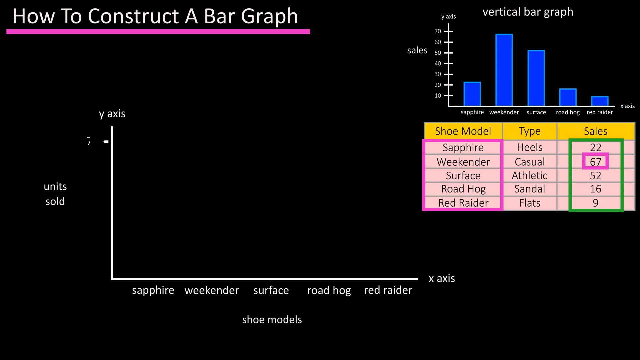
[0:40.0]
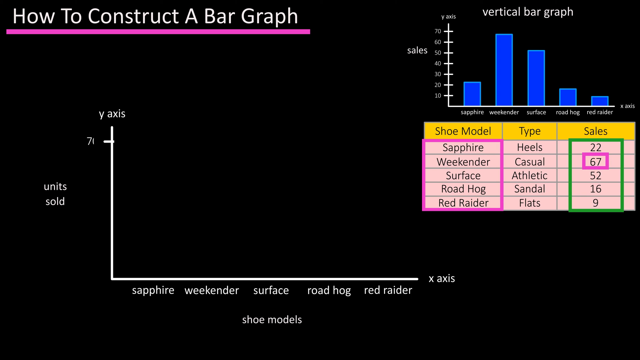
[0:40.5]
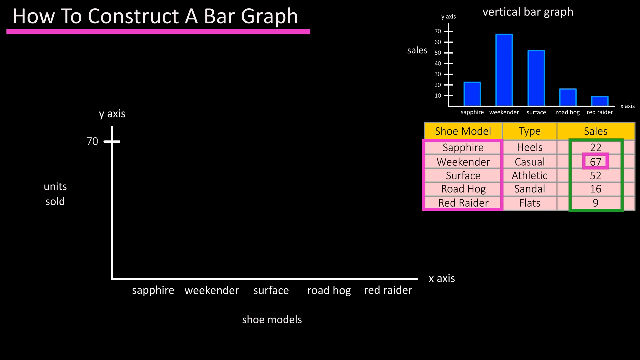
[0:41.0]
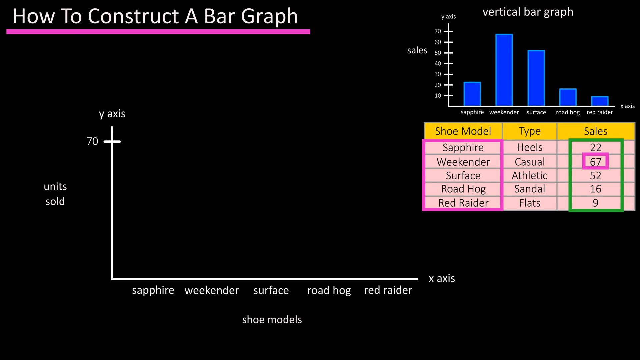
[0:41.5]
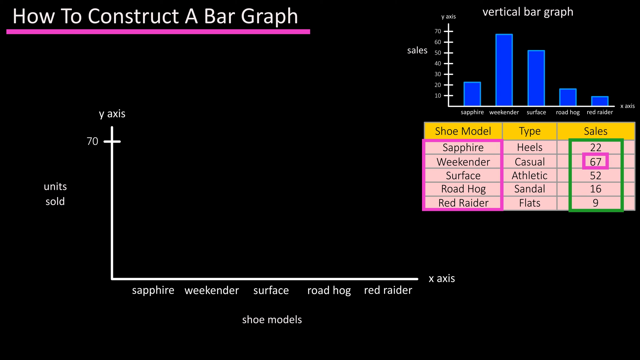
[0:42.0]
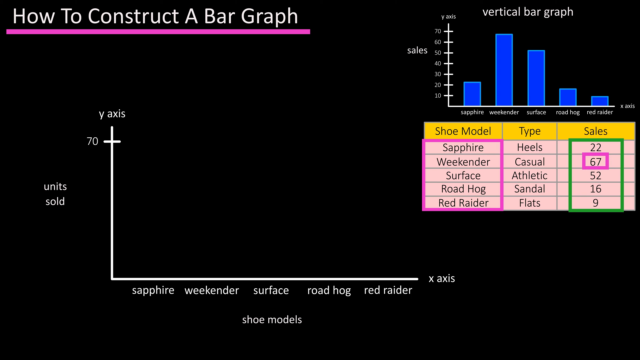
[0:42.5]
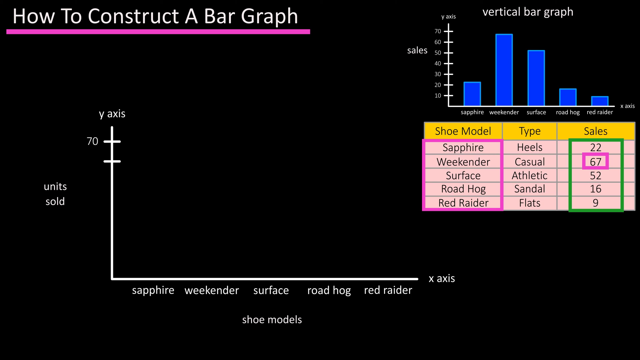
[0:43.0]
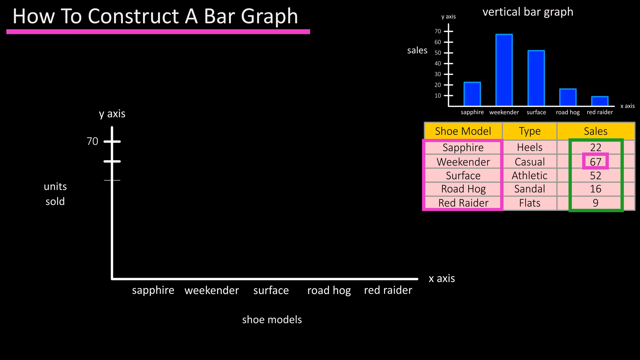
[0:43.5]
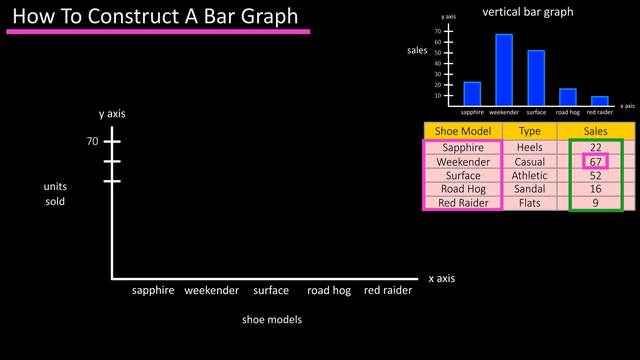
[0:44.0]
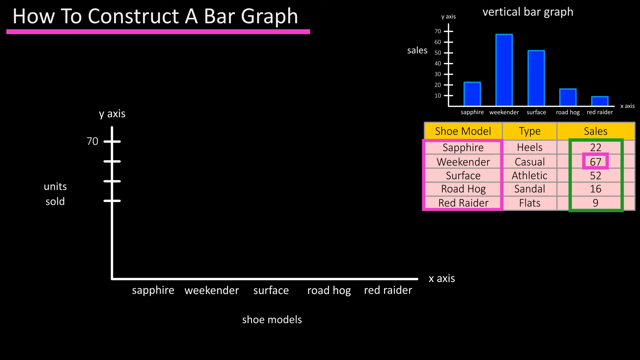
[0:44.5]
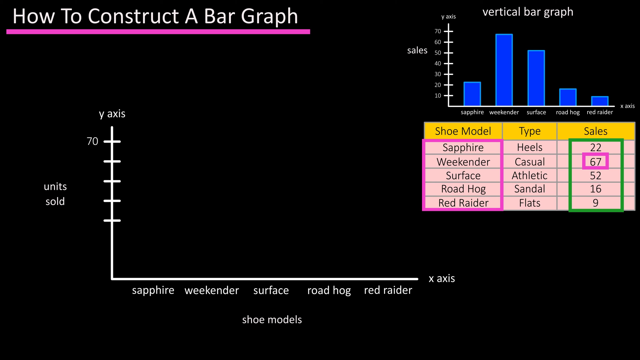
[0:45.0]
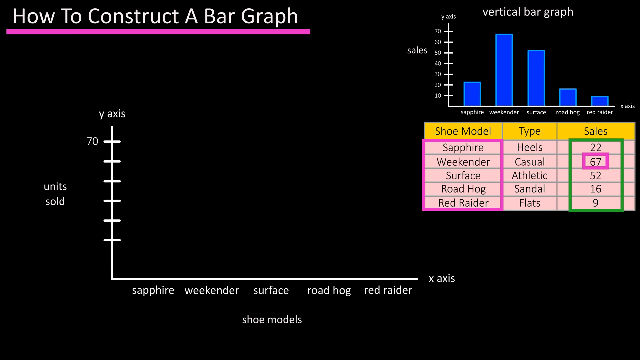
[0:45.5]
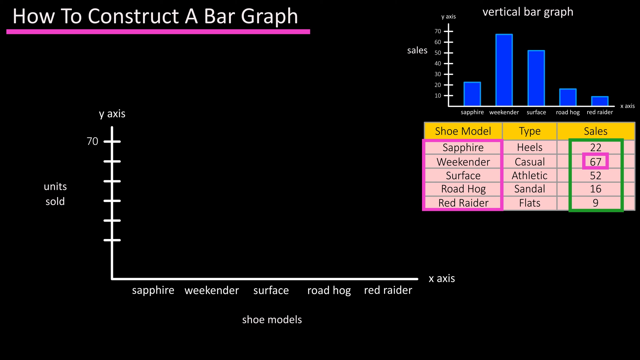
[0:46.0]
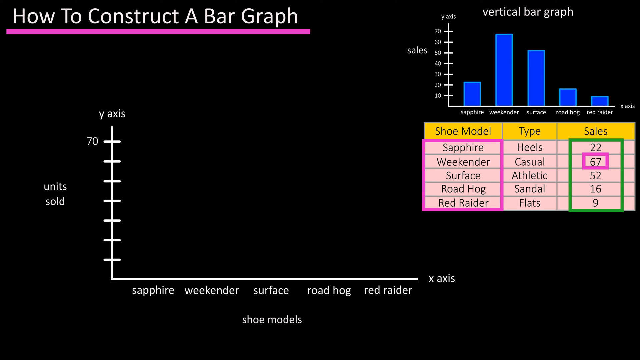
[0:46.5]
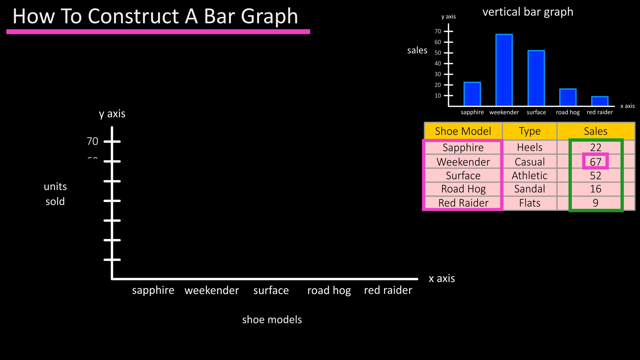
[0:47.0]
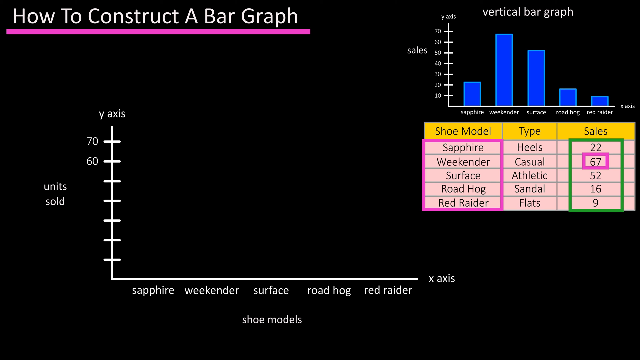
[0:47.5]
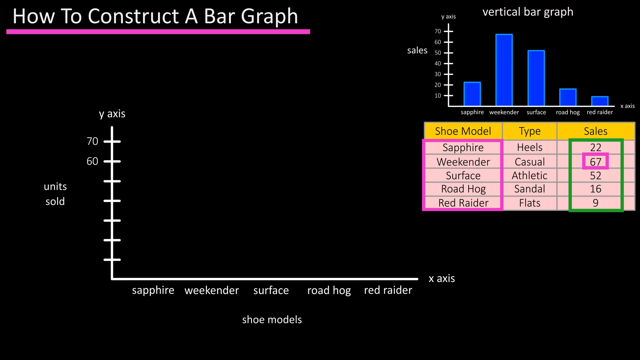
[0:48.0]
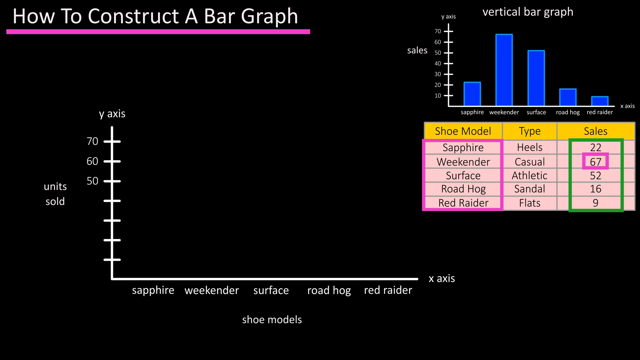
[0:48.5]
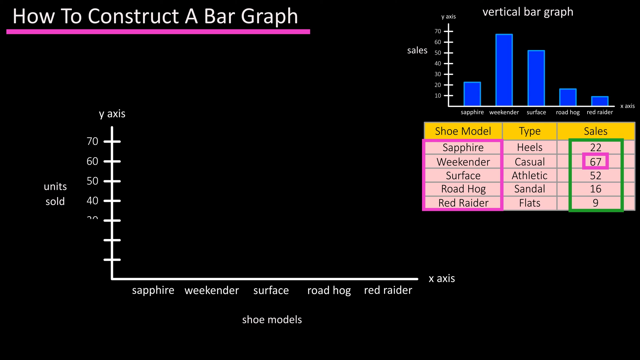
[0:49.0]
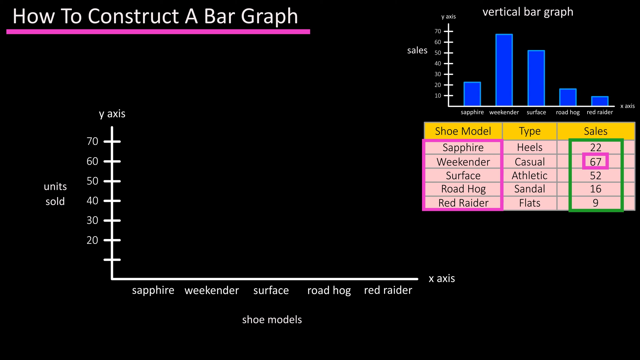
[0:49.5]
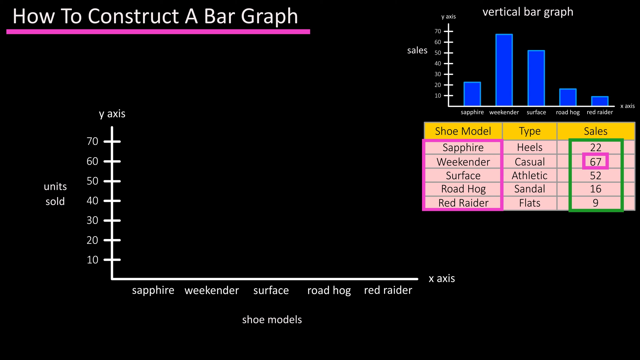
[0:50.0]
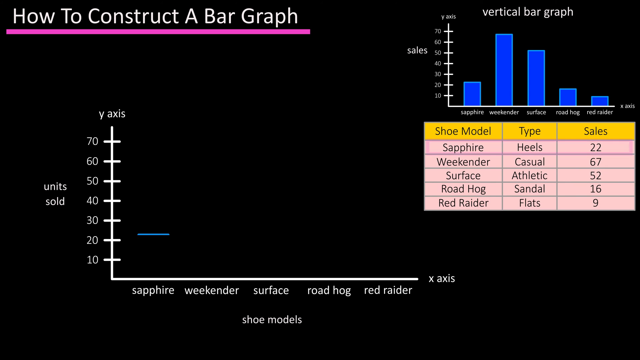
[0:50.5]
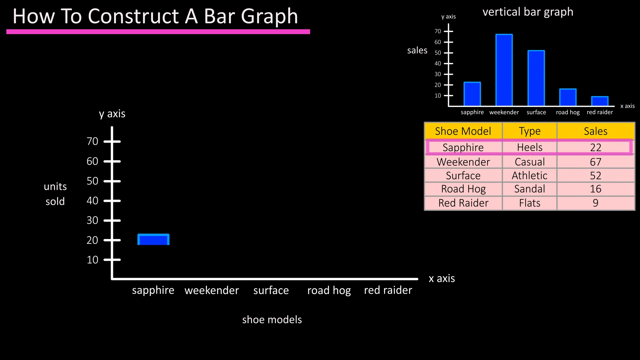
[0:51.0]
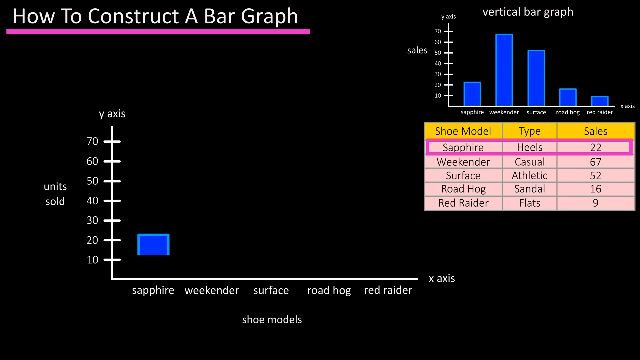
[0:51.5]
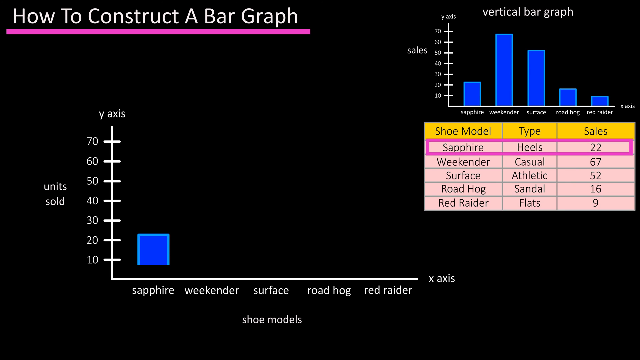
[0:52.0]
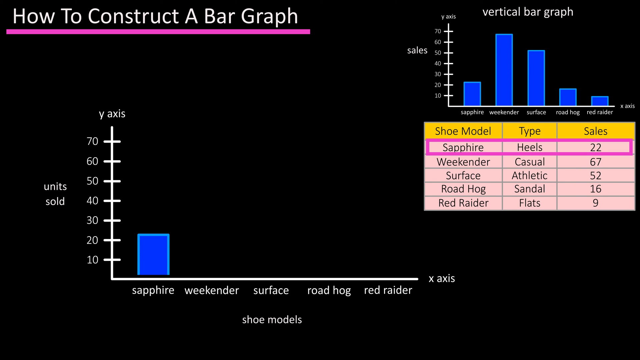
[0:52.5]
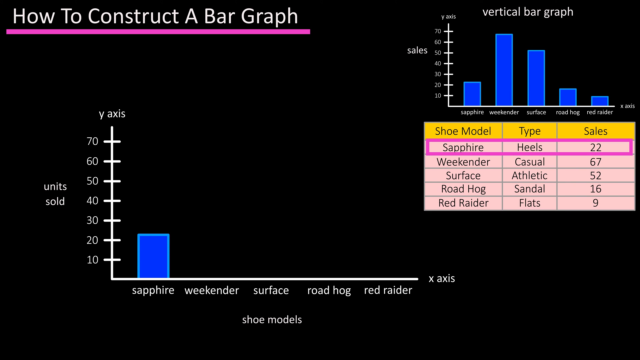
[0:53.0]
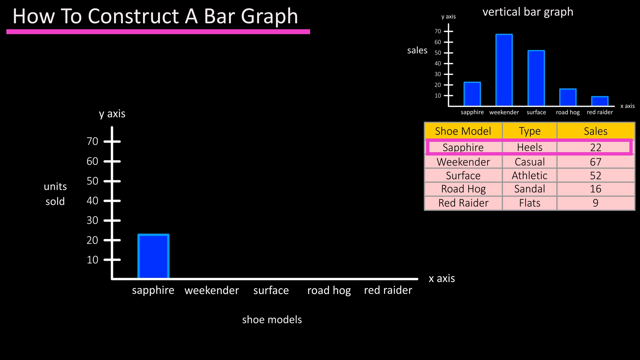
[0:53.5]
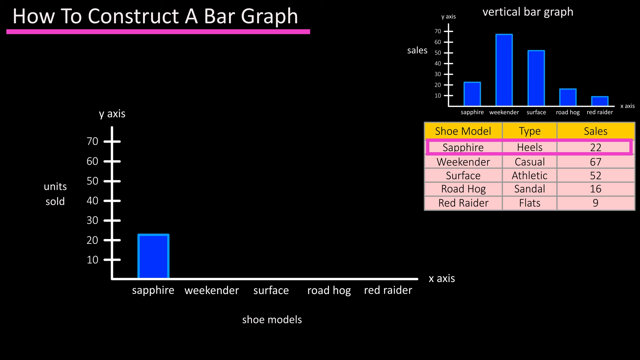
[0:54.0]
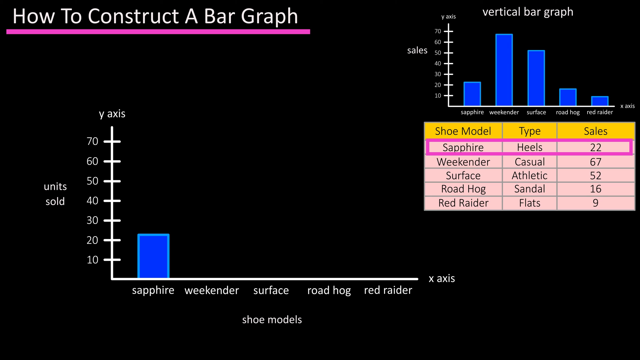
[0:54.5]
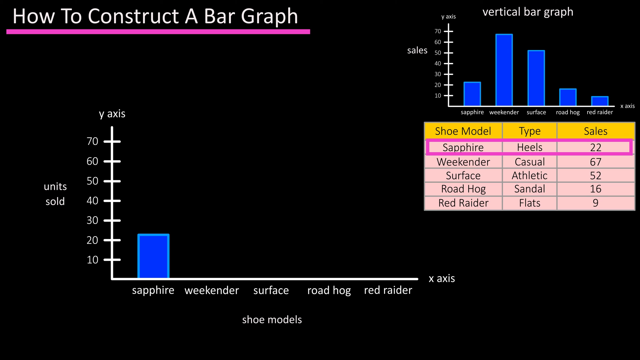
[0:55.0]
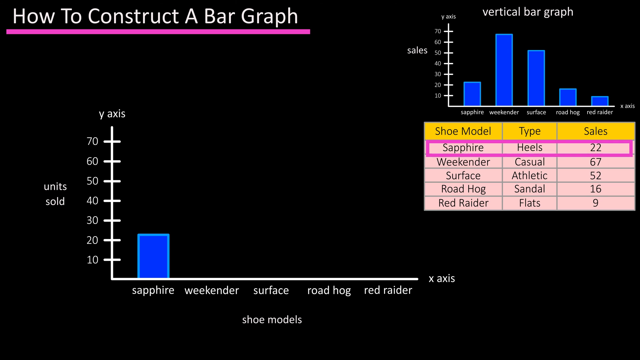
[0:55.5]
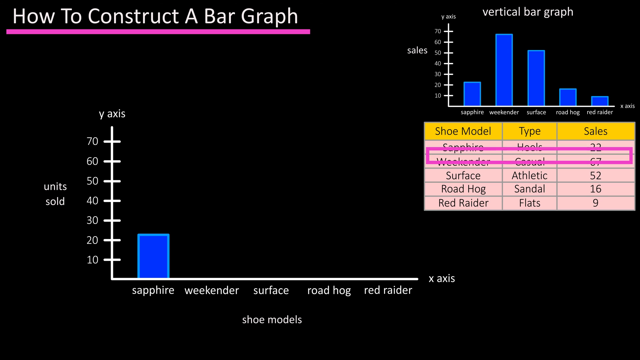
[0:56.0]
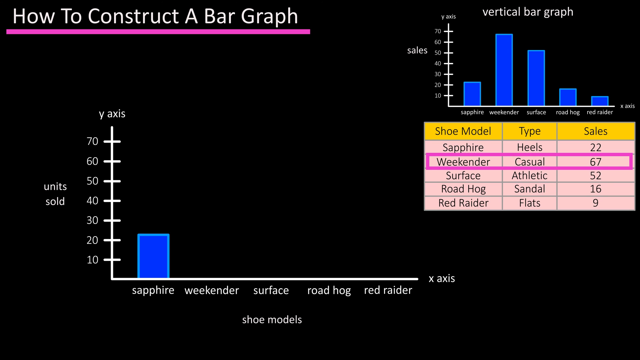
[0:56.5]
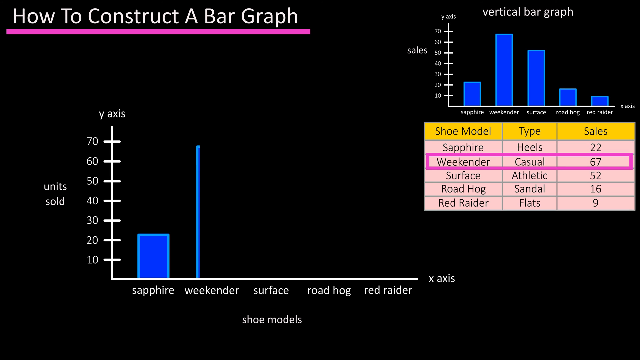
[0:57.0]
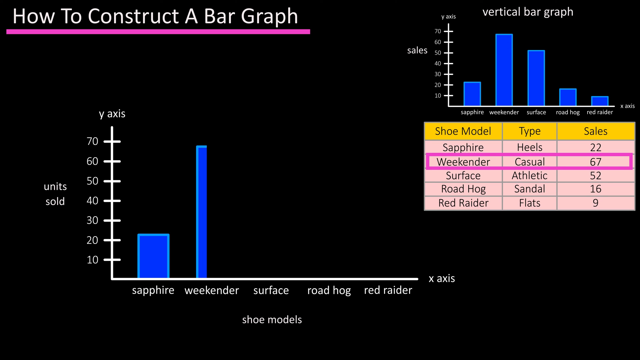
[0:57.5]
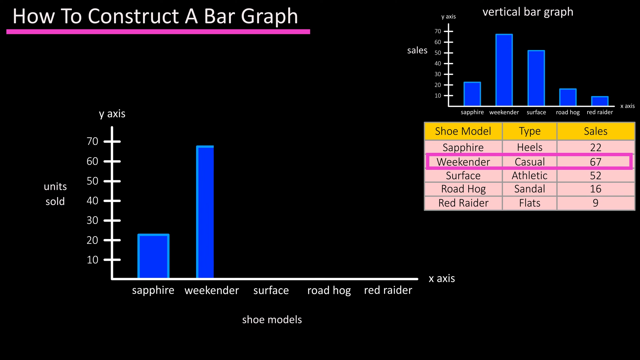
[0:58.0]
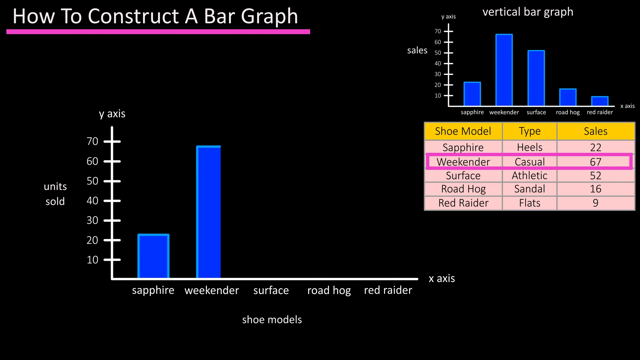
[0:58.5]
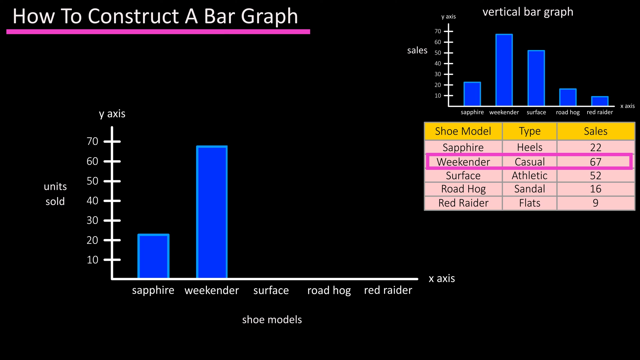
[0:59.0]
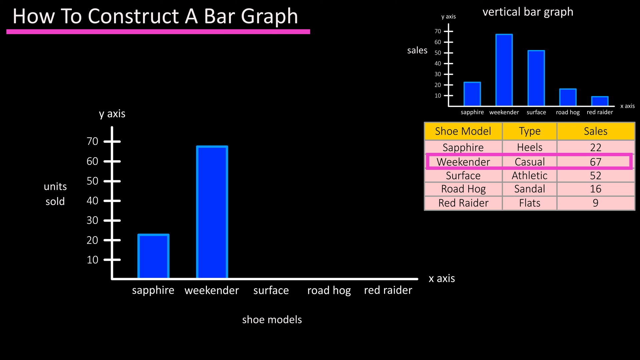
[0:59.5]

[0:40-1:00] Three depictions are shown at once. The main part of the screen holds just the outline of a bar graph, a y-axis and an x-axis with nothing on them. In the far right-hand corner is the vertical bar graph with all five bars, and right underneath it is the information that populates the chart: shoe model, type and sales. The y-axis and x-axis of the empty graph are then populated, and in the shoe model, type and sales information each number being incorporated into the graph is highlighted in pink. For example, Weekender casual shoes had 67 sales, and that 67 is placed on the bare-bones graph and turns into a blue bar, so the graph comes to look like the completed vertical bar graph on the far right-hand side.